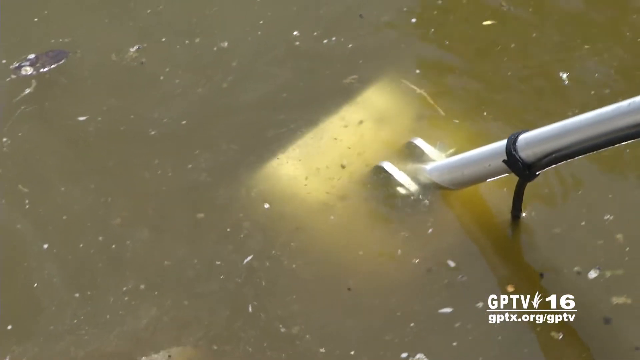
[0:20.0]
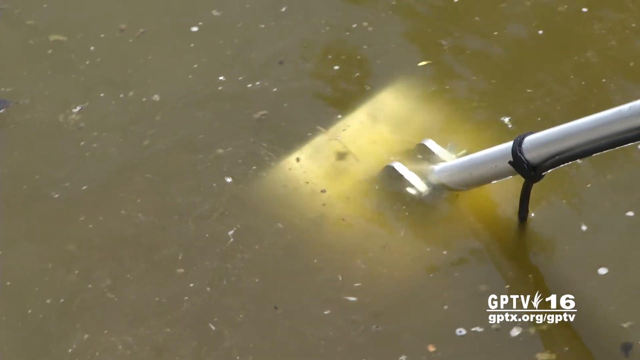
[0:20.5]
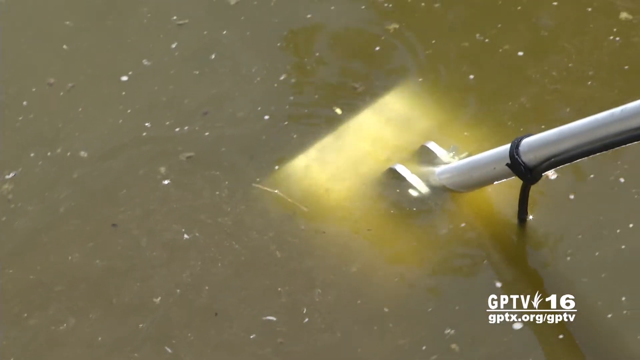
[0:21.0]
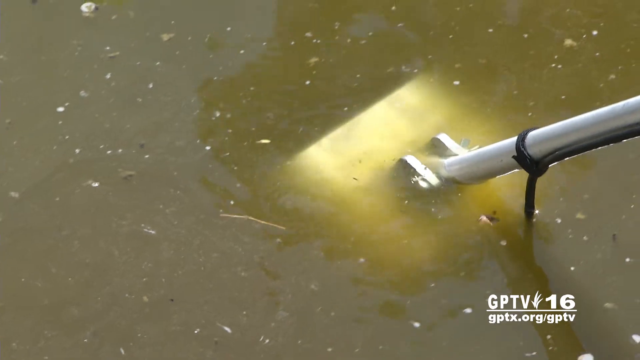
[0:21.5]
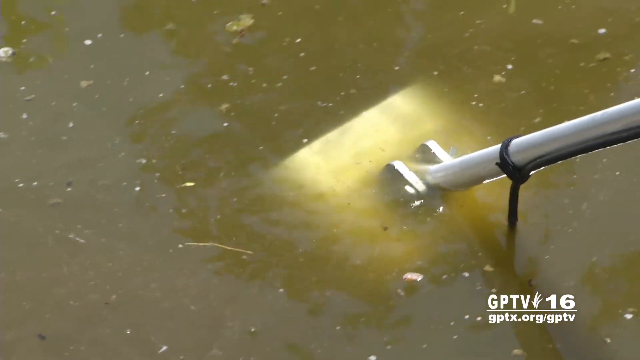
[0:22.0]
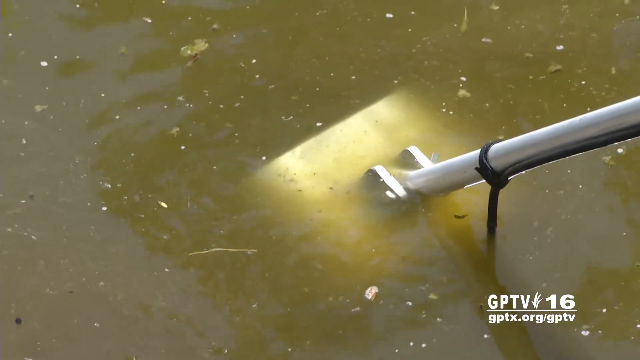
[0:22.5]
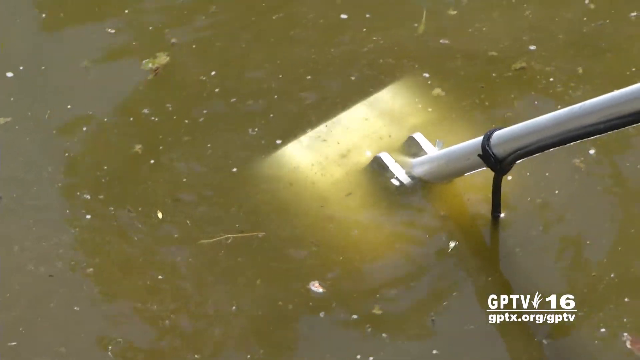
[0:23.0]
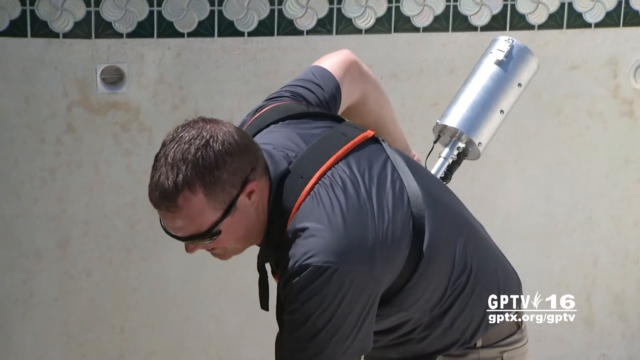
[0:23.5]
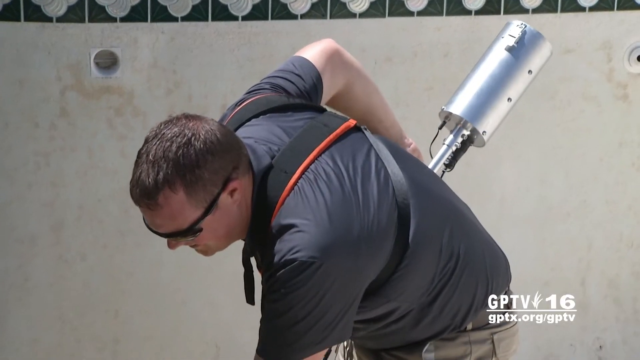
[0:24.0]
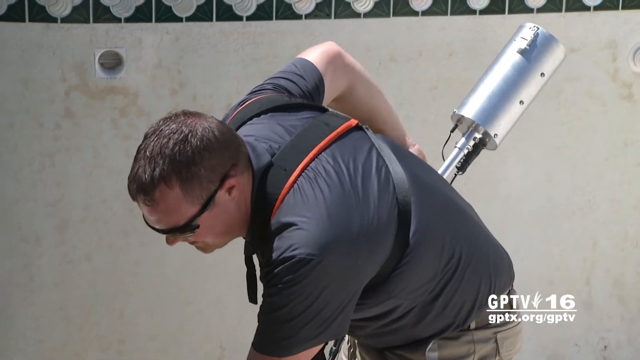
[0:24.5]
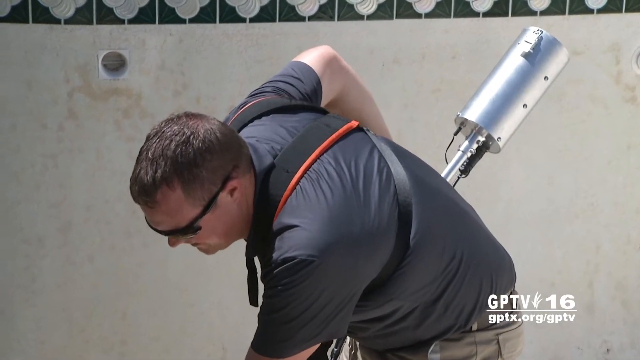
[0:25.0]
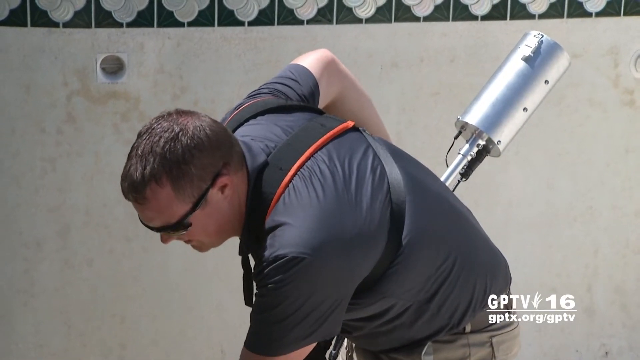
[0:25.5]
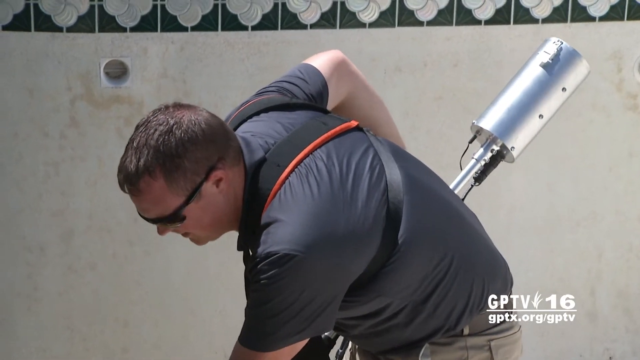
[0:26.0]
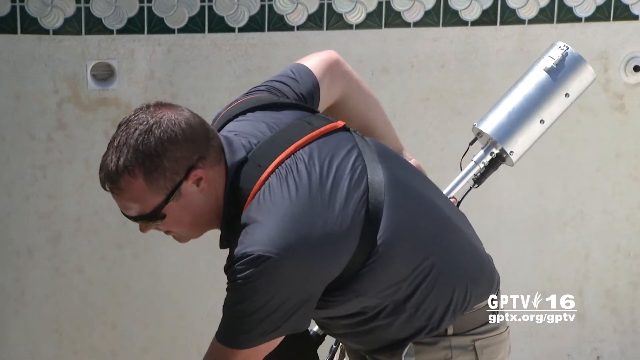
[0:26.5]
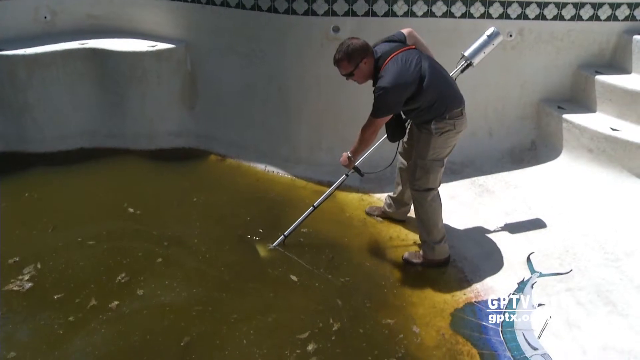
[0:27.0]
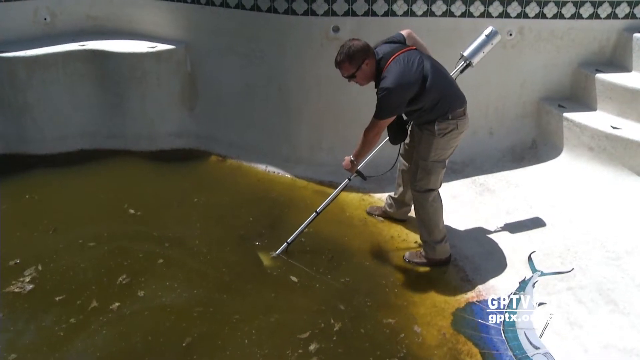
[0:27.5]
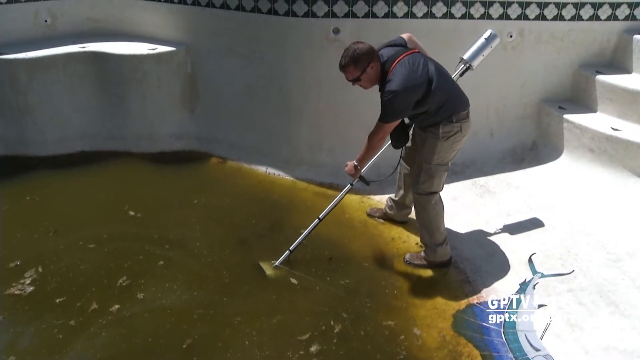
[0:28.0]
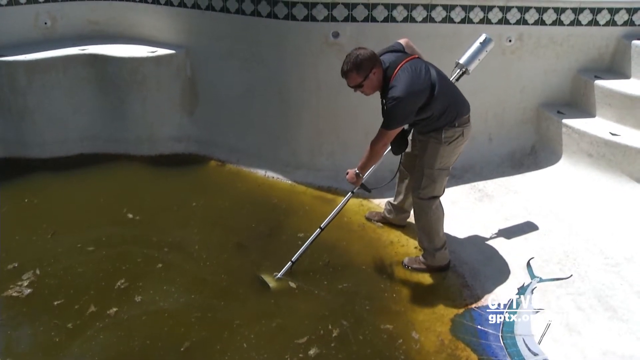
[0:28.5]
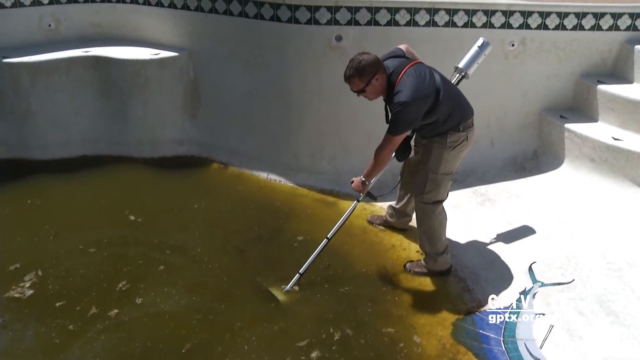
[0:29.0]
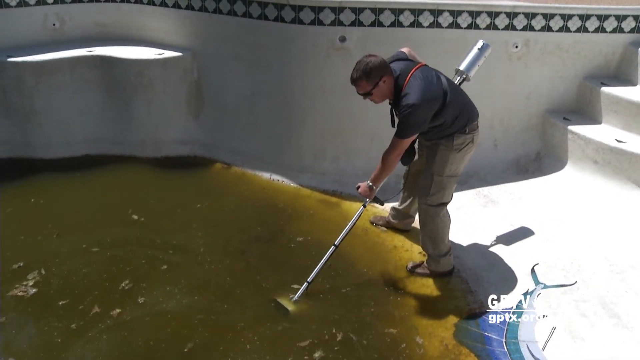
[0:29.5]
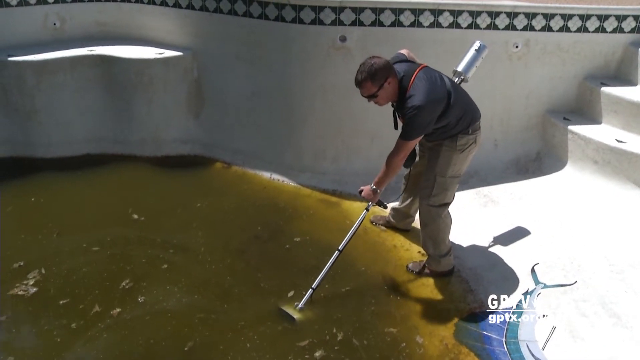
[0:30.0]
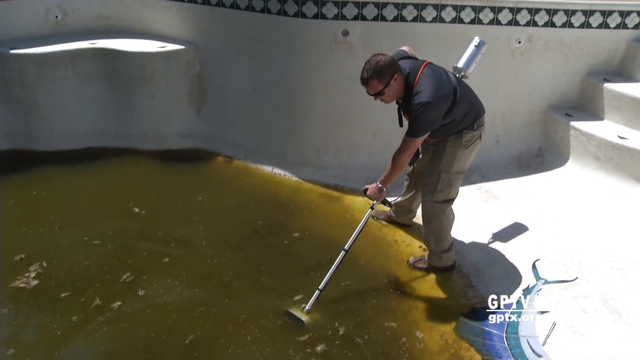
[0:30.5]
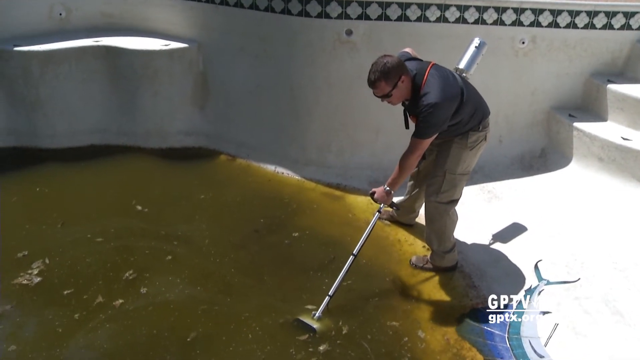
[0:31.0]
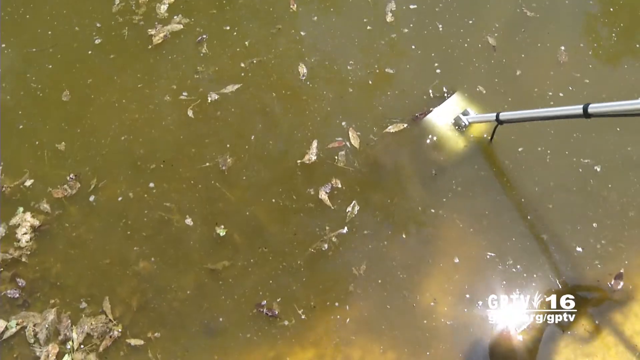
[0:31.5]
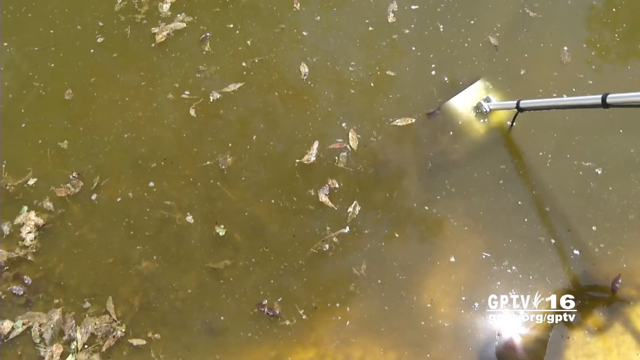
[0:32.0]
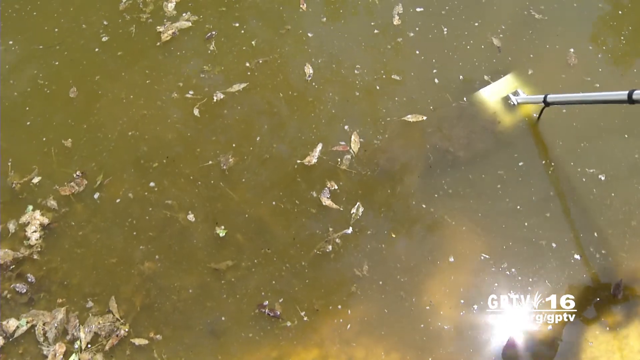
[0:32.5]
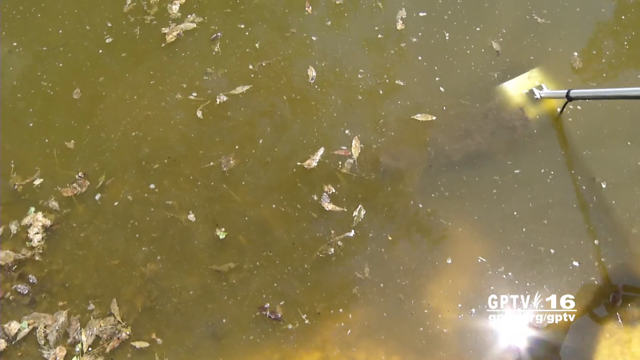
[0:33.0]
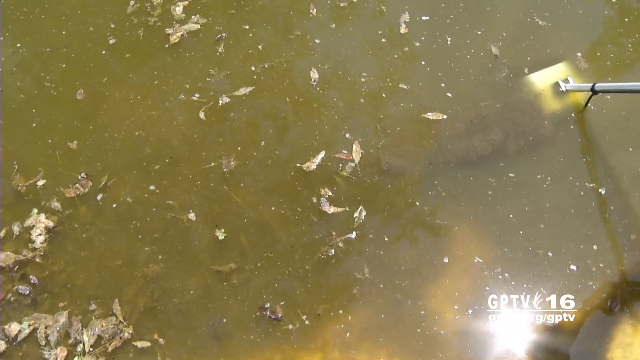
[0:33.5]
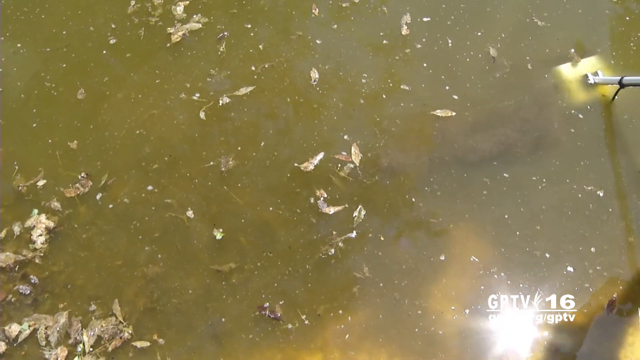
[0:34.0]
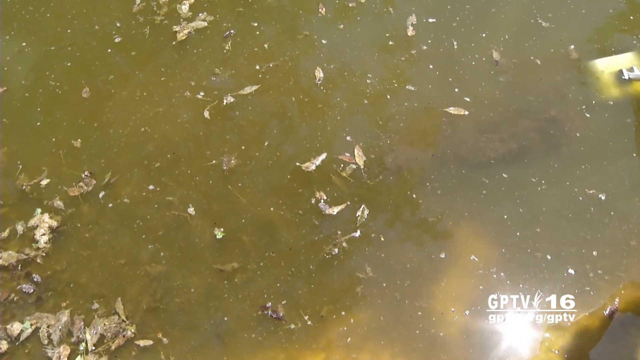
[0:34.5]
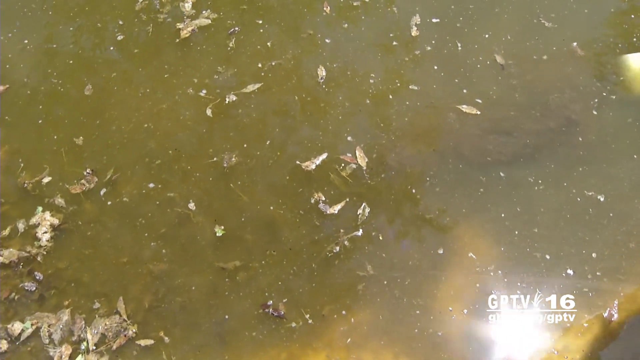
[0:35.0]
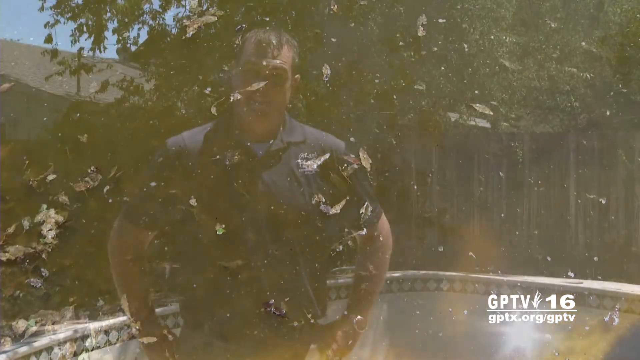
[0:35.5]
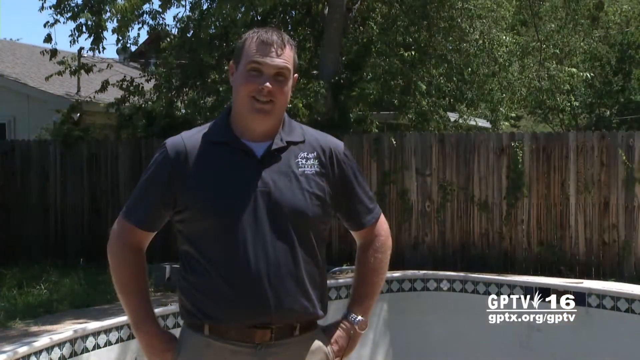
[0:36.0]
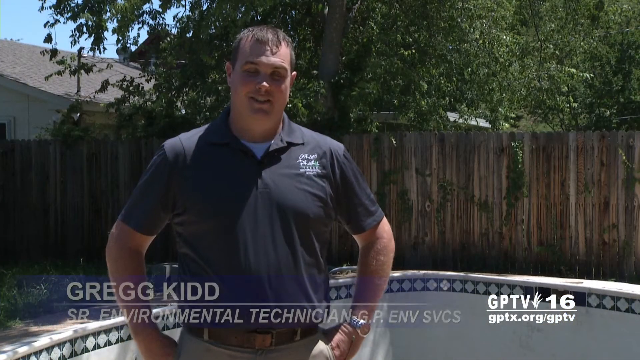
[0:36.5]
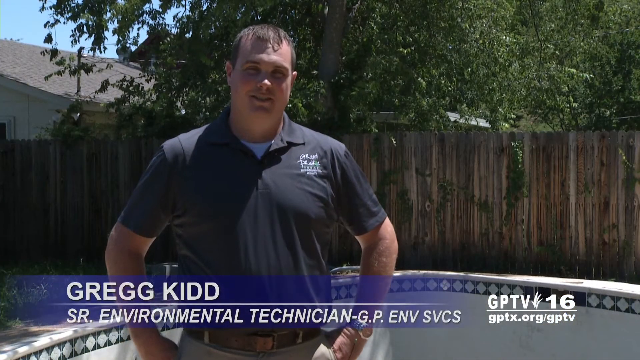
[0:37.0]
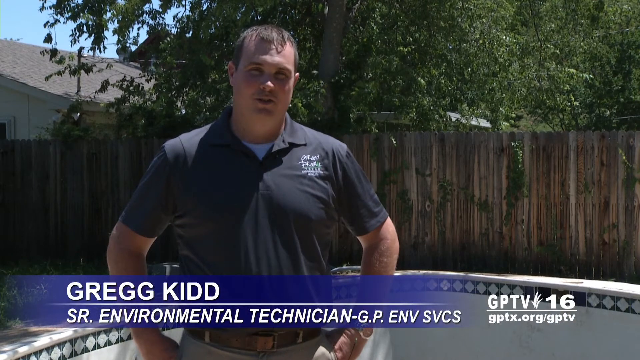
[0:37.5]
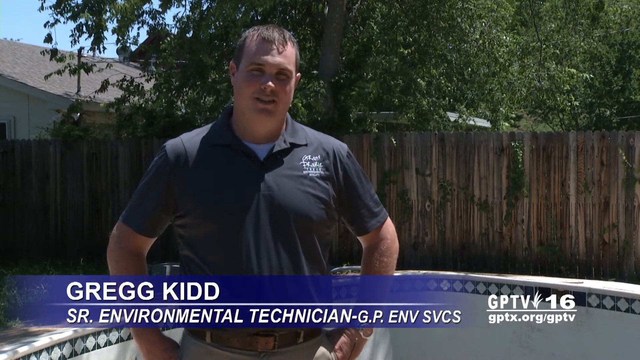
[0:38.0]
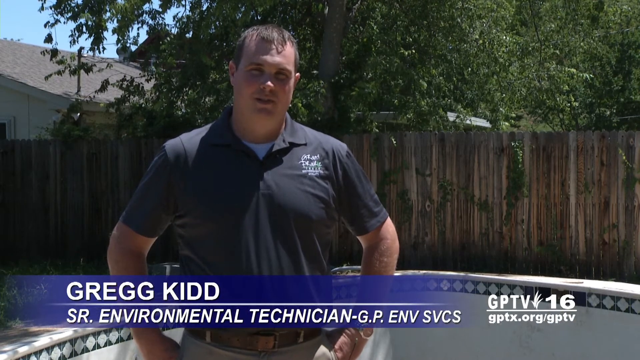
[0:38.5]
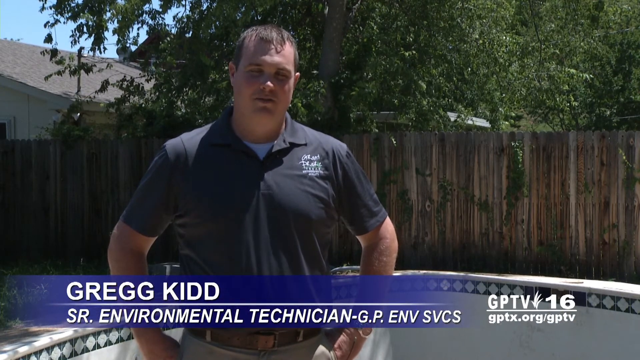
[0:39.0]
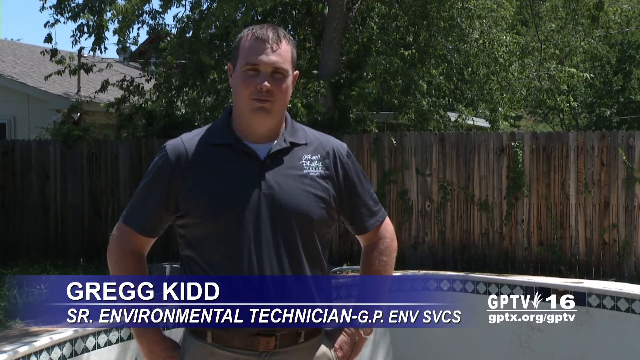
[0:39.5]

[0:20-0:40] A metal box on a metal pole is held under stagnant pool water and slowly moved from left to right, with a black tube running along the pole. The shot cuts to a man holding the handle of the metal device. A strap on his shoulder connects to the device he moves through the water. He is bent over, and at the other end of the device there is a metal cylinder. His feet are partially submerged in the green murky water of the swimming pool. Holding a black handle attached to the metal pole, he moves it to his left in the water, then a cut shows him moving it to the right. The video cuts to an interview with the man without the device, labeled "Greg Kidd, Senior Environmental Technician, GP Environmental Services". He has both hands resting on his hips as he talks toward the camera in front of the swimming pool.